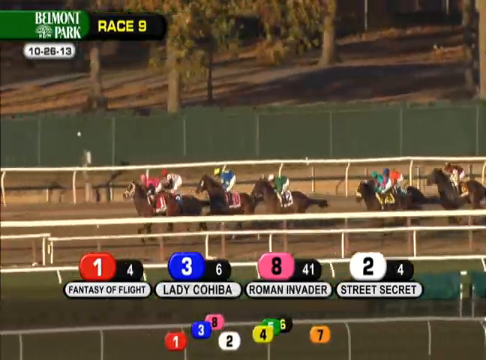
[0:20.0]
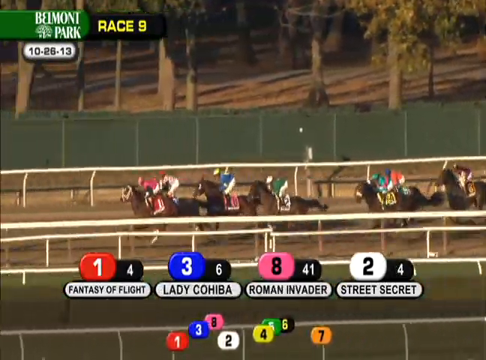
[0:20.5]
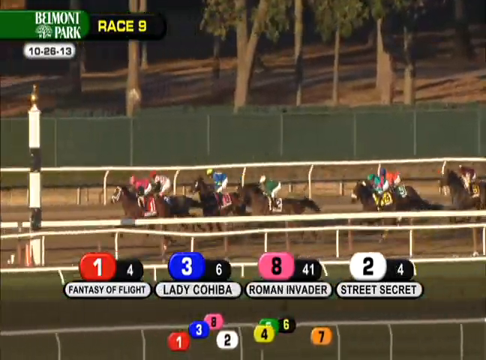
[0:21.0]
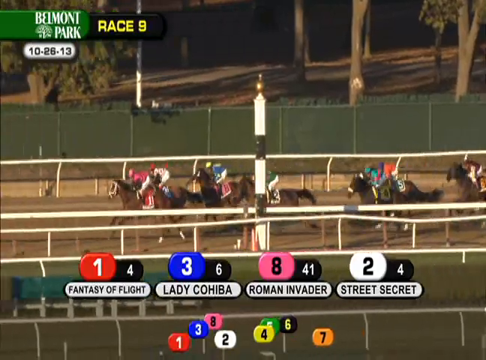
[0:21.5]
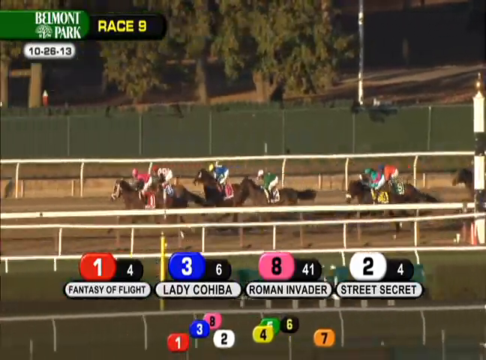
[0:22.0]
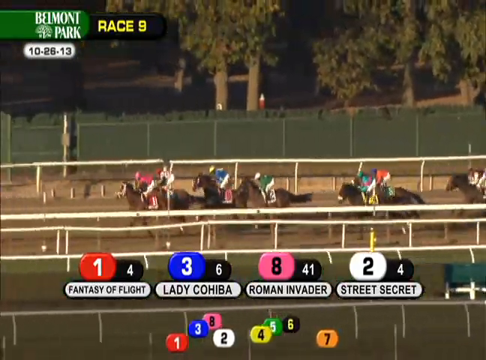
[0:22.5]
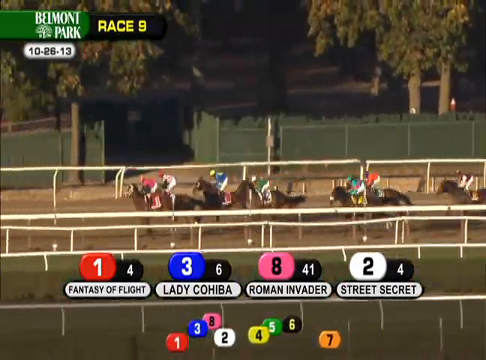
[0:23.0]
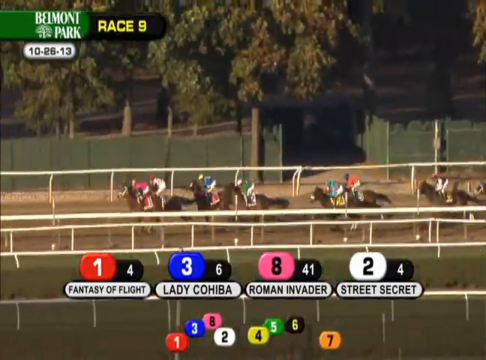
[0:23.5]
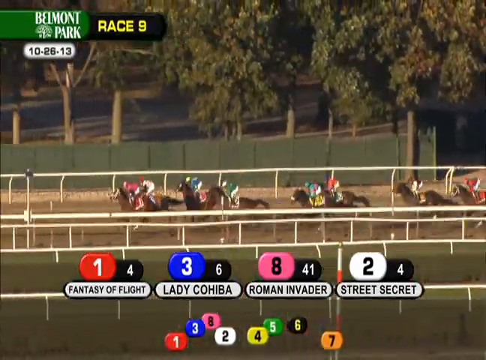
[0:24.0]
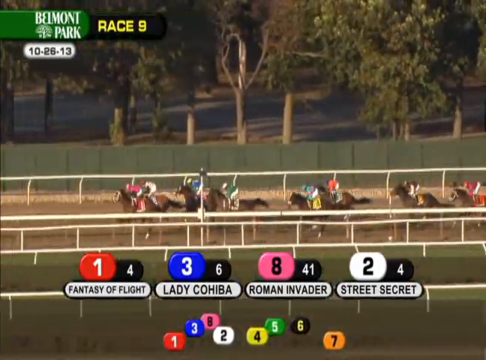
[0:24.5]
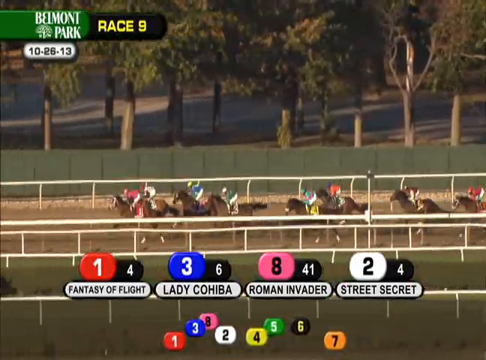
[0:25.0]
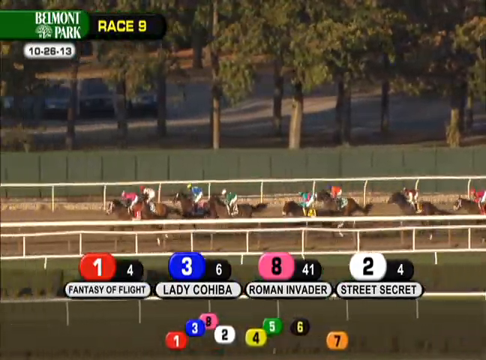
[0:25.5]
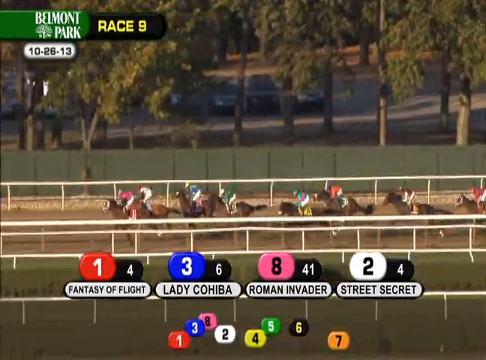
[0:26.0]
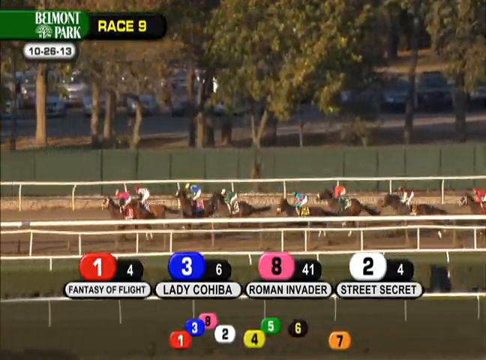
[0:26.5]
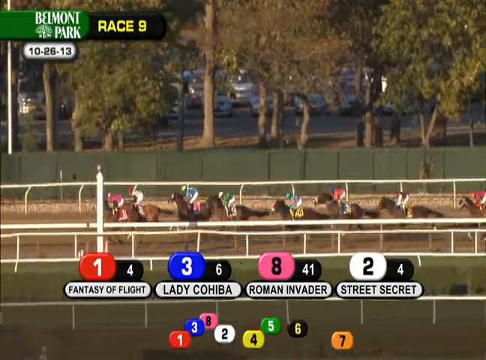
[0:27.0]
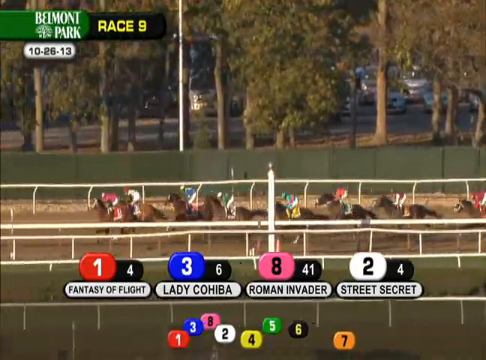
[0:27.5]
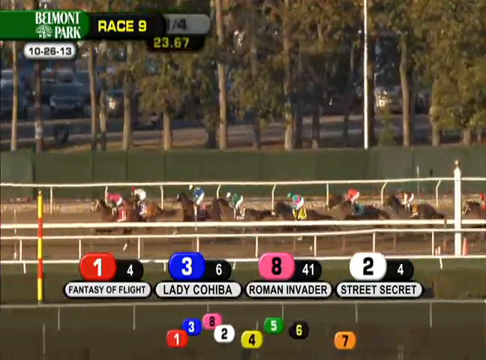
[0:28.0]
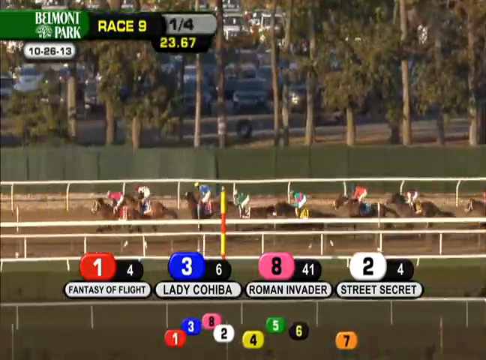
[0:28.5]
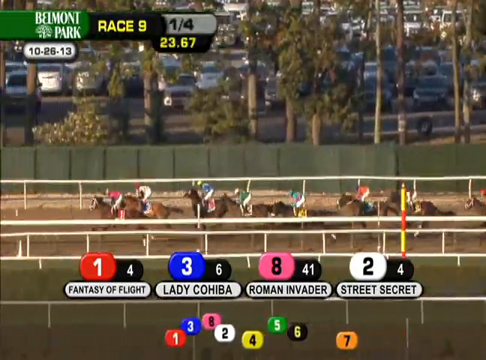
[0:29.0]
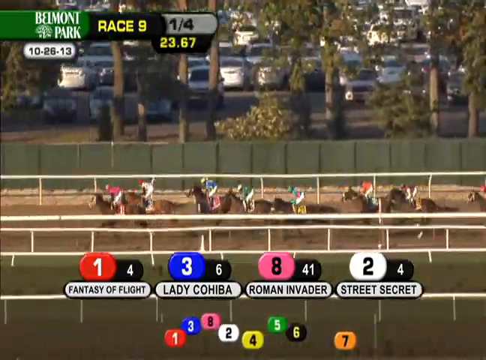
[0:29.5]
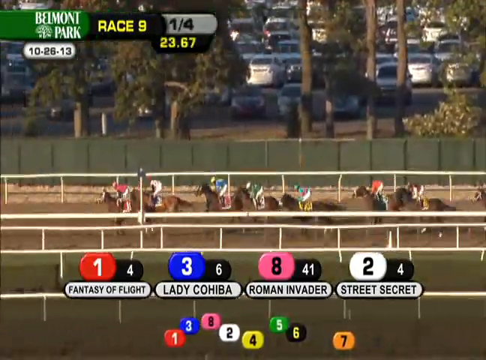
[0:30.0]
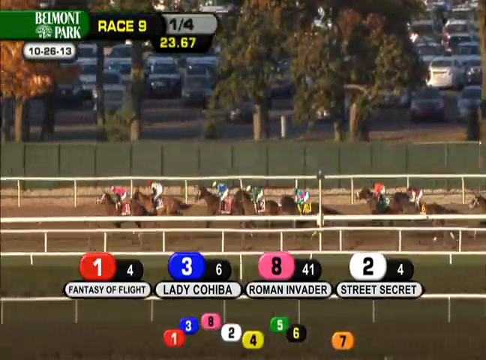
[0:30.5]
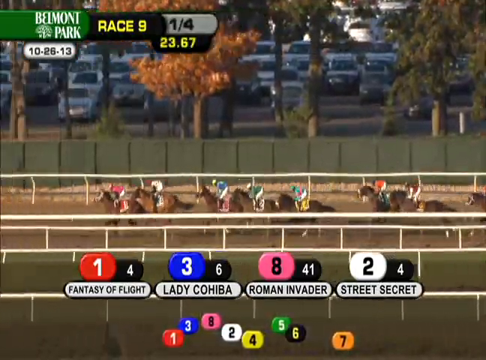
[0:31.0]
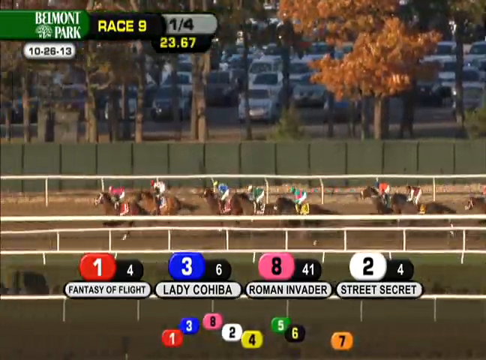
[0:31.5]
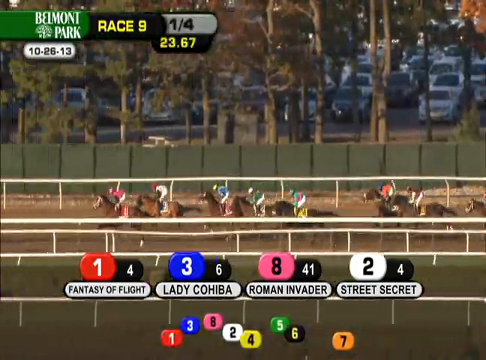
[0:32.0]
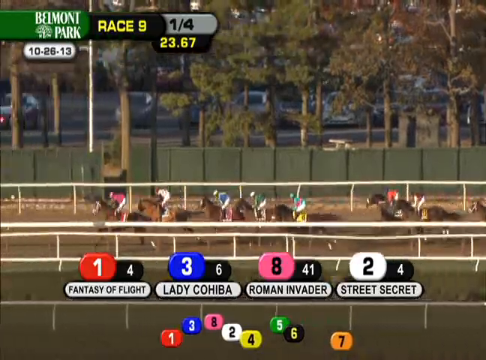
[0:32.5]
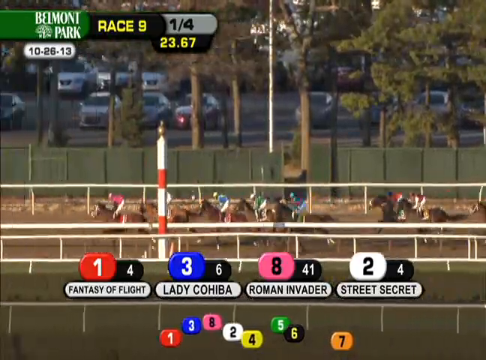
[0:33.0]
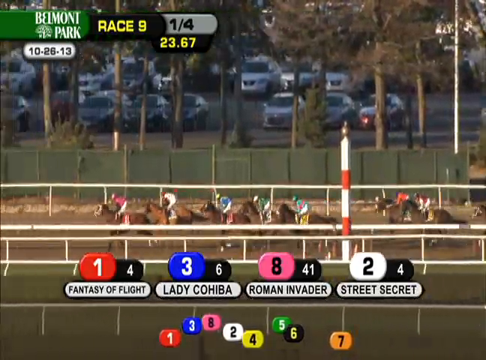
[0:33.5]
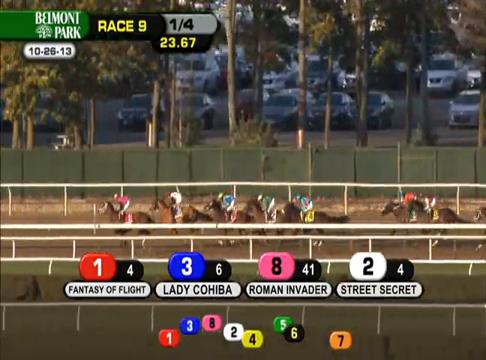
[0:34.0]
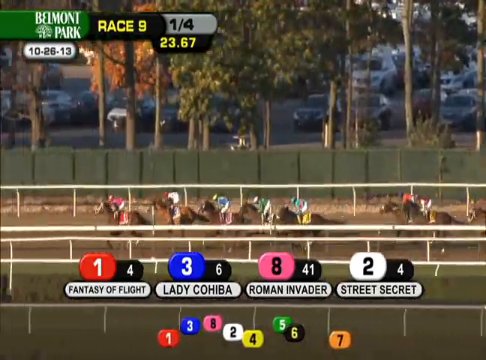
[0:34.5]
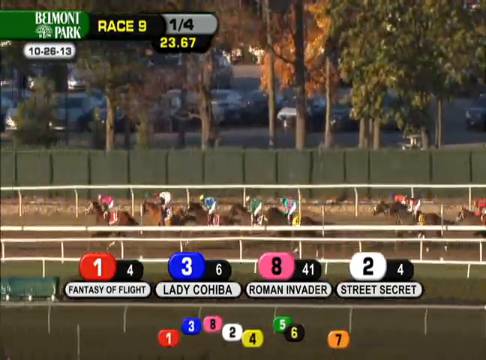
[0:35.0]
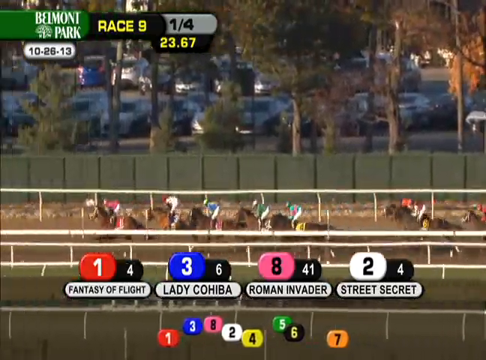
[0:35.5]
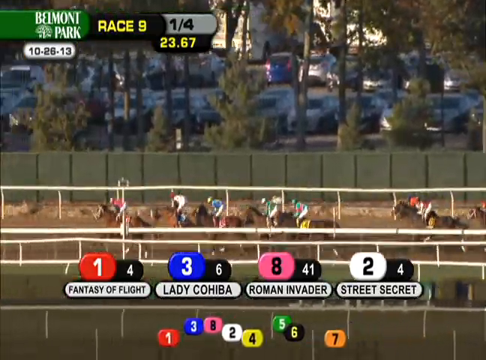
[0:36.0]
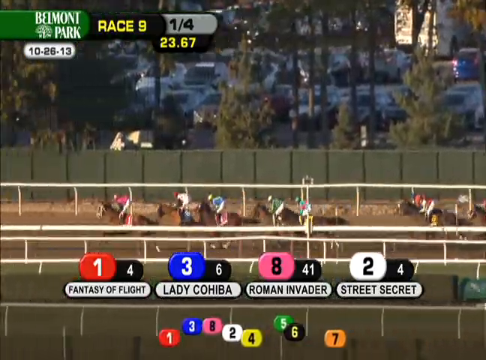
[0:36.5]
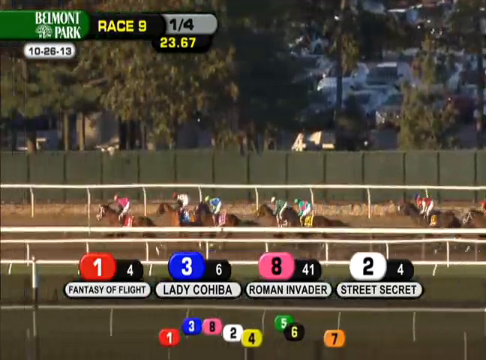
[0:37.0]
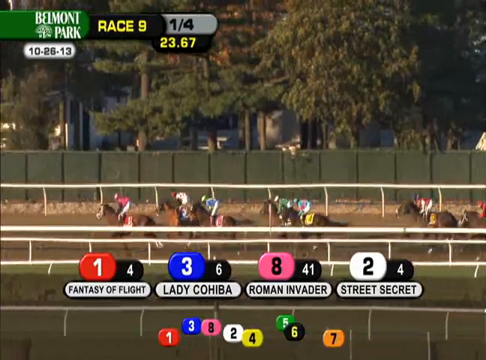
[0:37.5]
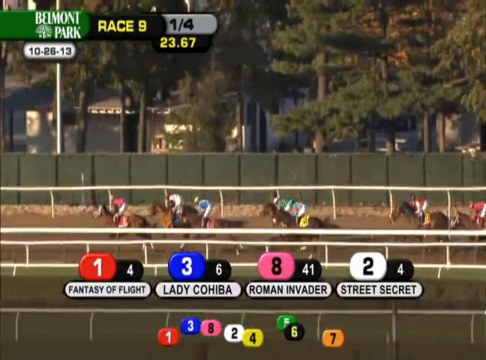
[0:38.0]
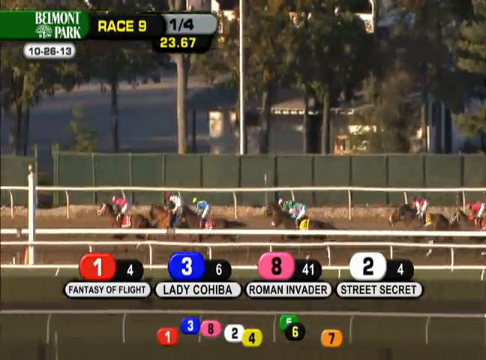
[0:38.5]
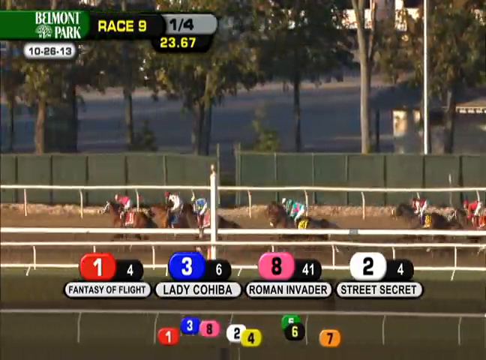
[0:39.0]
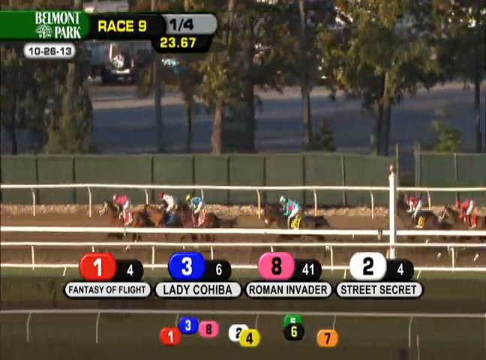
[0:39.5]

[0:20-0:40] Horses race down a horse racing track. On-screen indicators show the names of several horses and their current positions: number 1 is Fantasy of Flight, number 3 is Lady Cohiba, number 8 is Roman Invader, and number 2 is Street Secret. At the top left of the screen are a logo for Belmont Park and a text indicator showing that this is race 9 of the day, along with a date reading October 26, 2013. In the background, a large fence blocks off the race track, and there is a field full of trees. White guardrails surround the track. The horses and their jockeys gallop quickly forward, passing various markers on the track that indicate their progress. As they move forward, the background shifts from a wooded area to a parking lot where a number of cars are parked just behind the track. The horses keep running forward in a straight line.